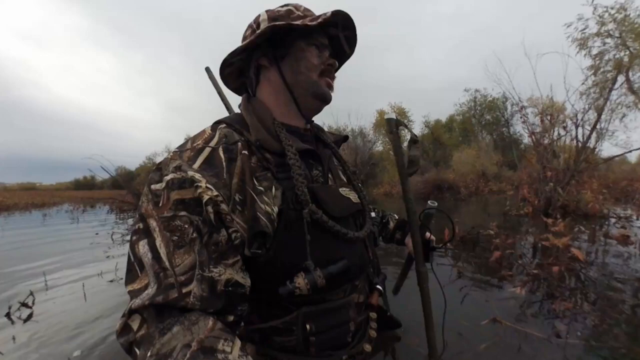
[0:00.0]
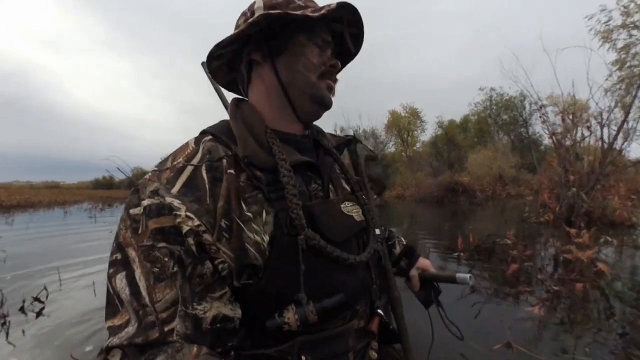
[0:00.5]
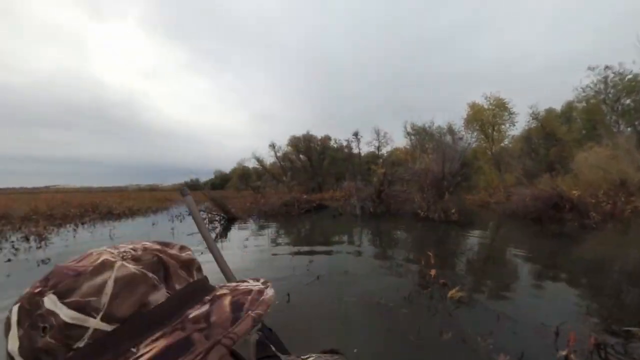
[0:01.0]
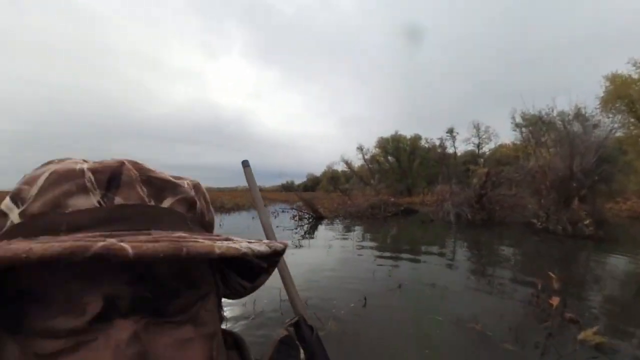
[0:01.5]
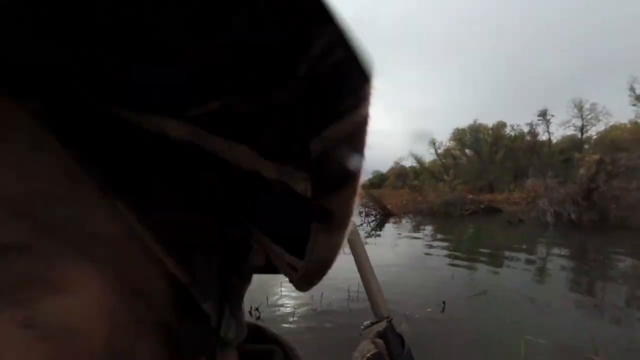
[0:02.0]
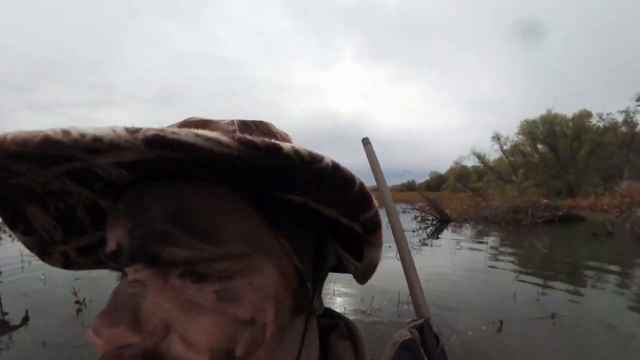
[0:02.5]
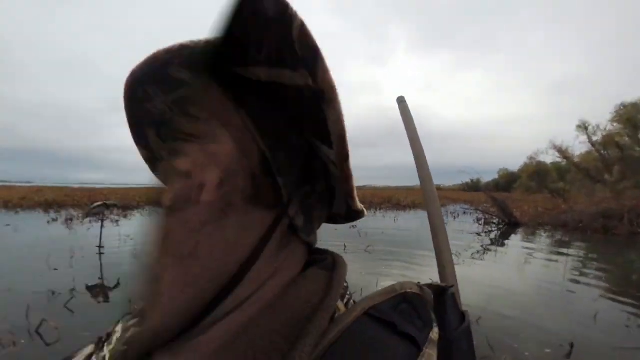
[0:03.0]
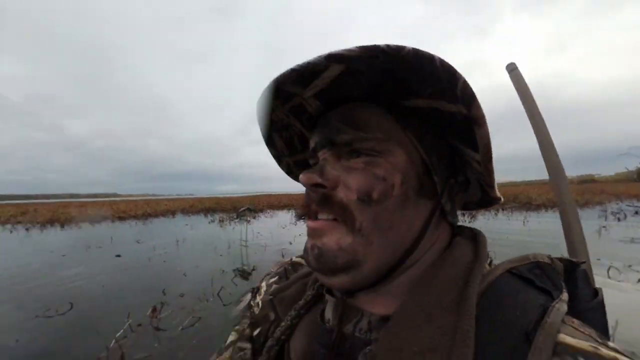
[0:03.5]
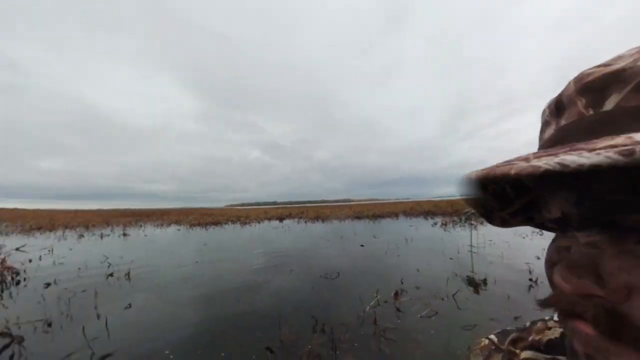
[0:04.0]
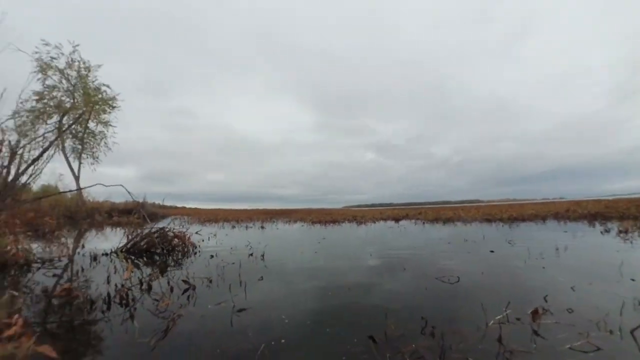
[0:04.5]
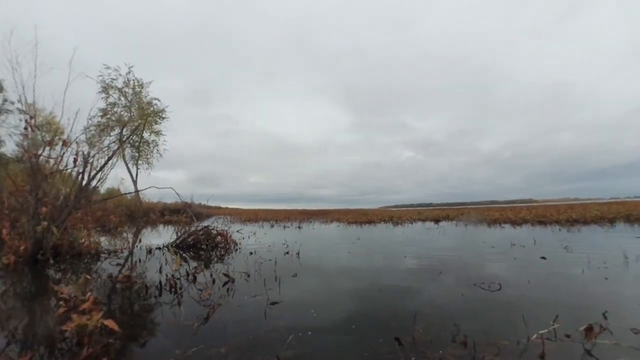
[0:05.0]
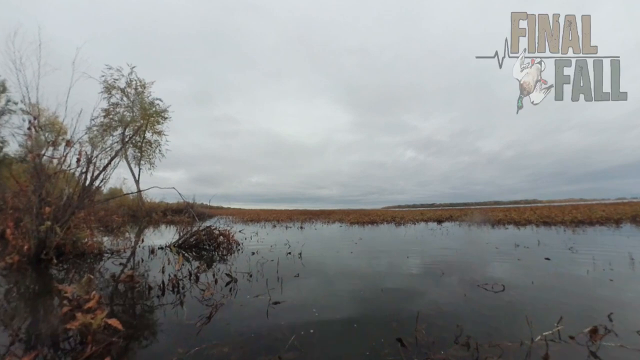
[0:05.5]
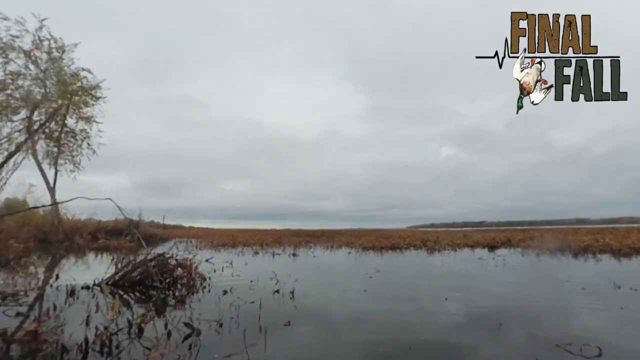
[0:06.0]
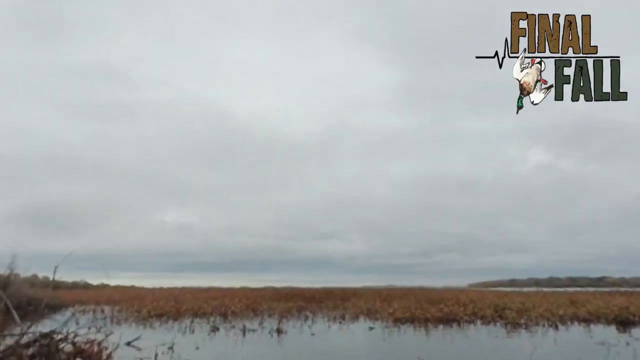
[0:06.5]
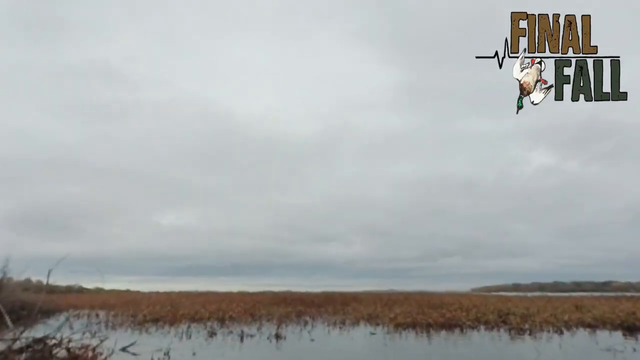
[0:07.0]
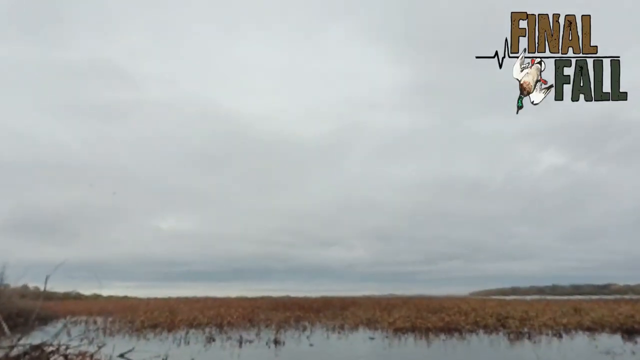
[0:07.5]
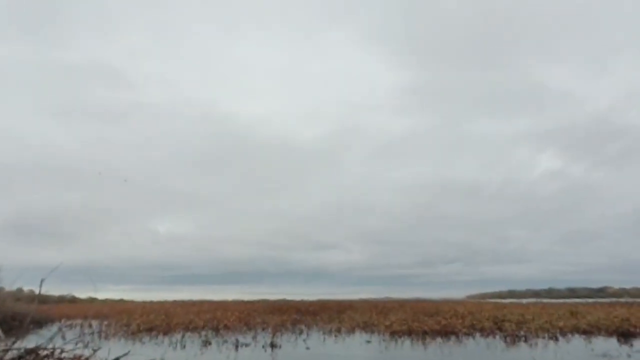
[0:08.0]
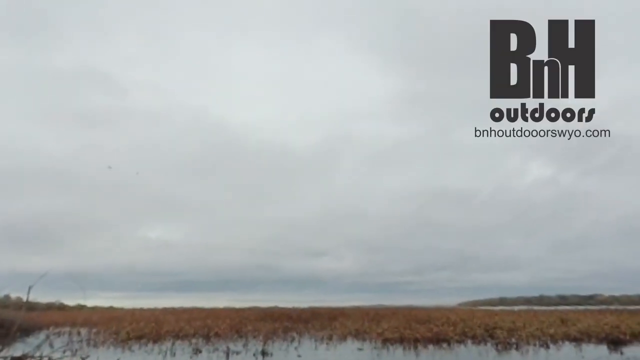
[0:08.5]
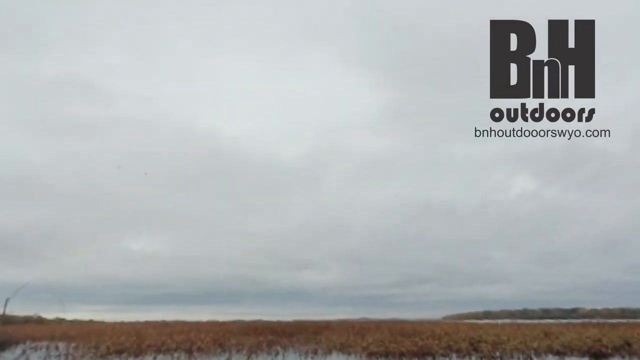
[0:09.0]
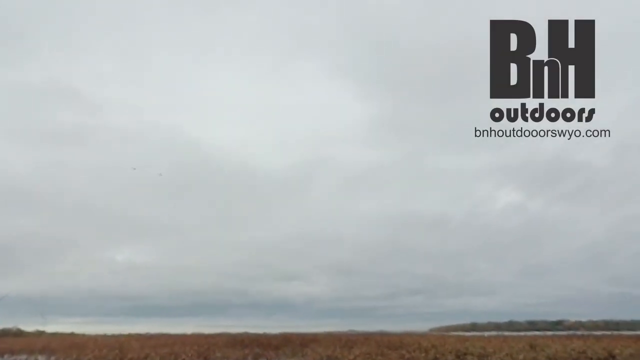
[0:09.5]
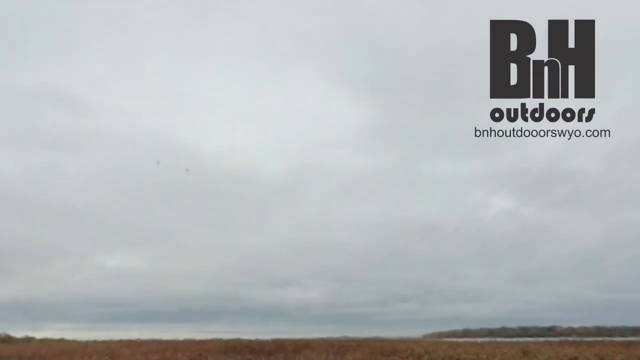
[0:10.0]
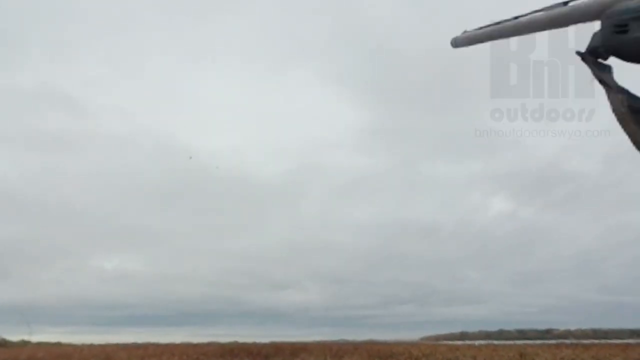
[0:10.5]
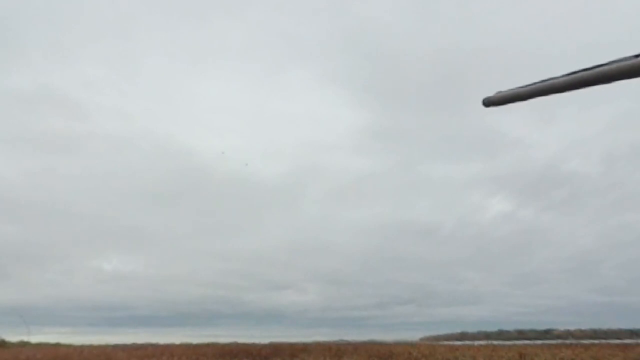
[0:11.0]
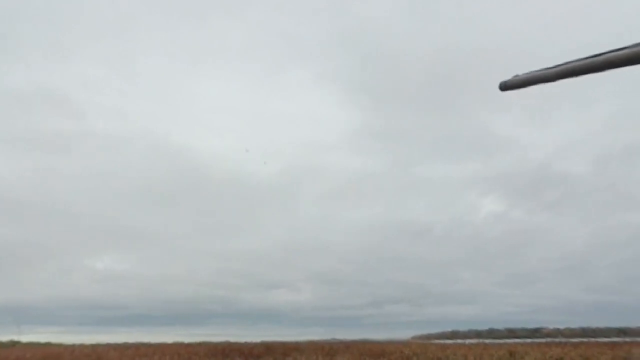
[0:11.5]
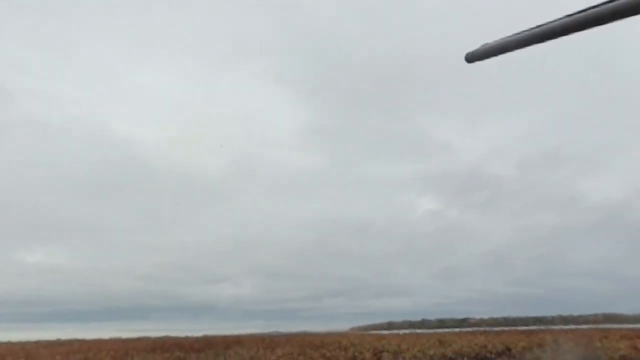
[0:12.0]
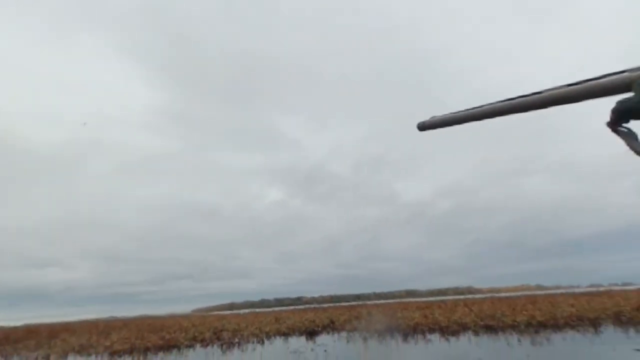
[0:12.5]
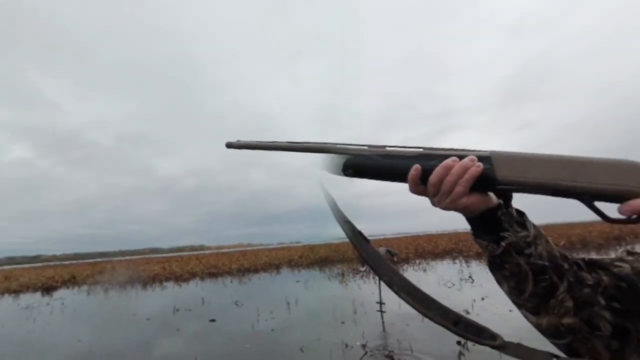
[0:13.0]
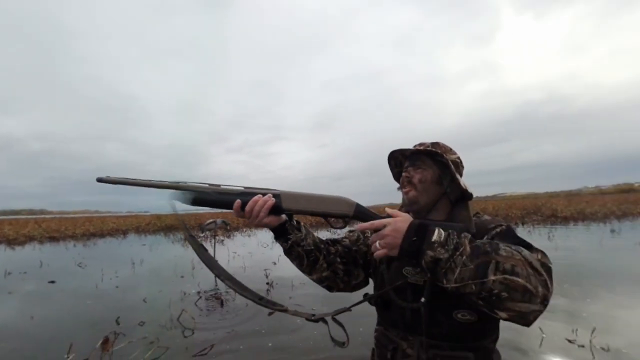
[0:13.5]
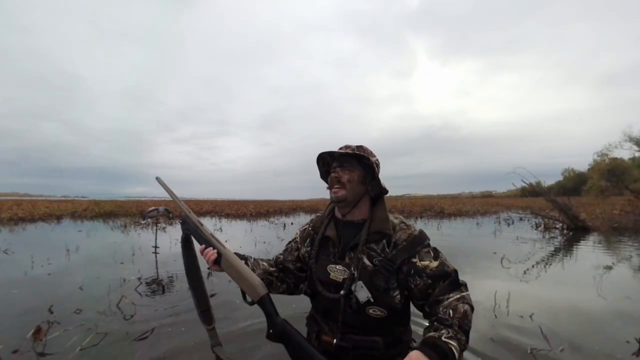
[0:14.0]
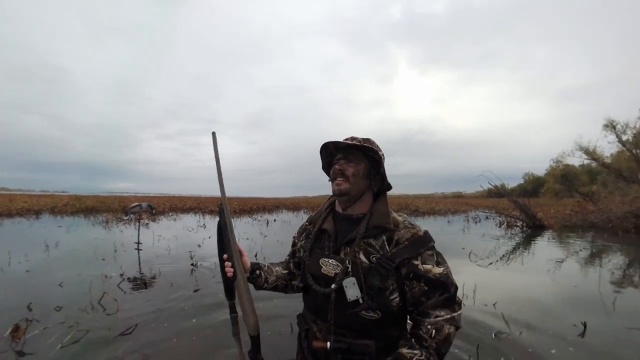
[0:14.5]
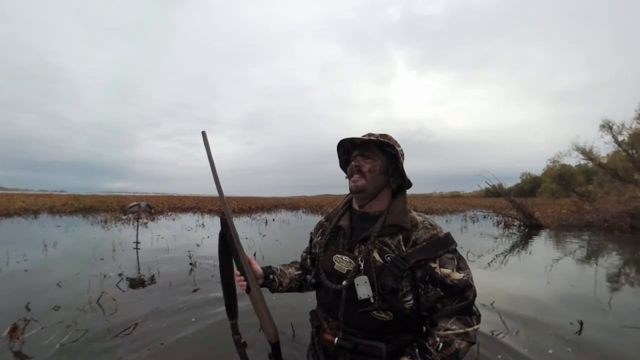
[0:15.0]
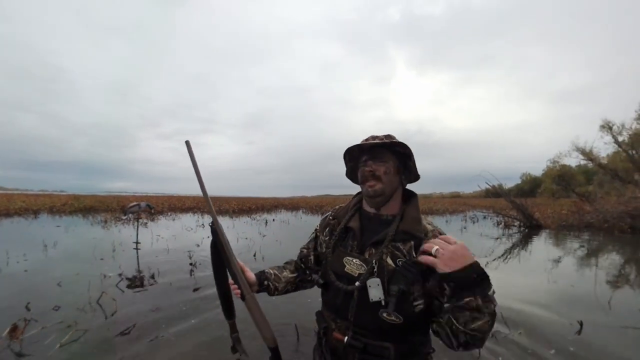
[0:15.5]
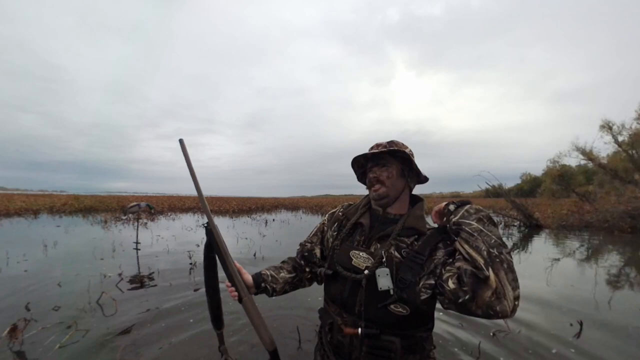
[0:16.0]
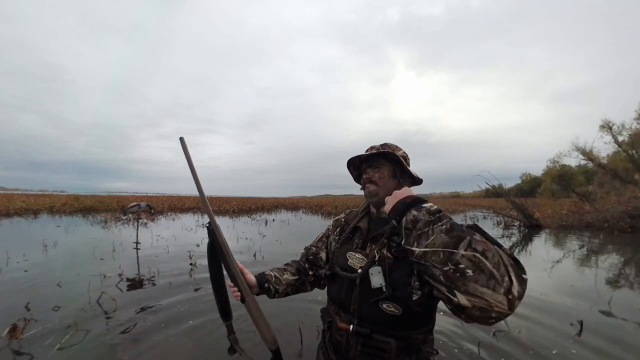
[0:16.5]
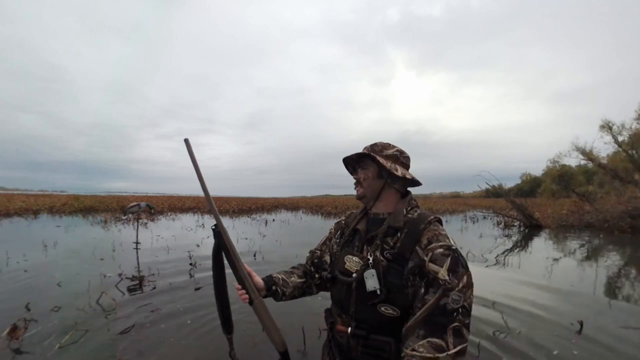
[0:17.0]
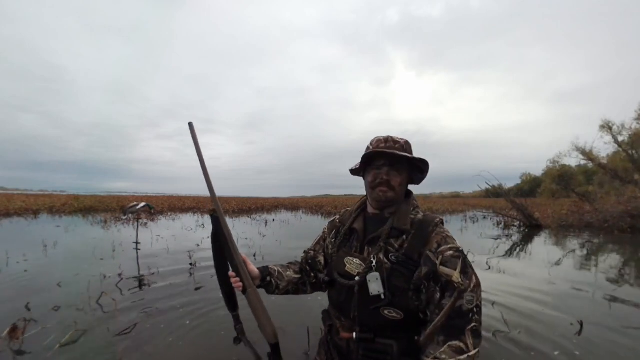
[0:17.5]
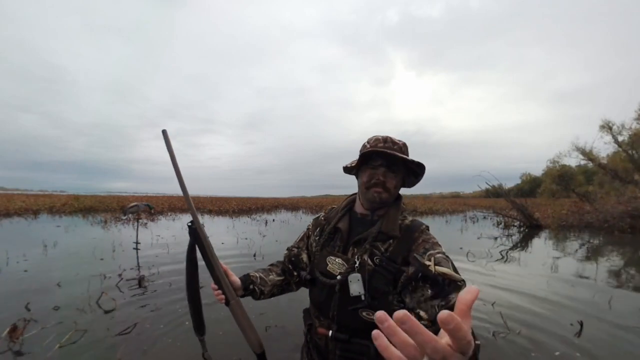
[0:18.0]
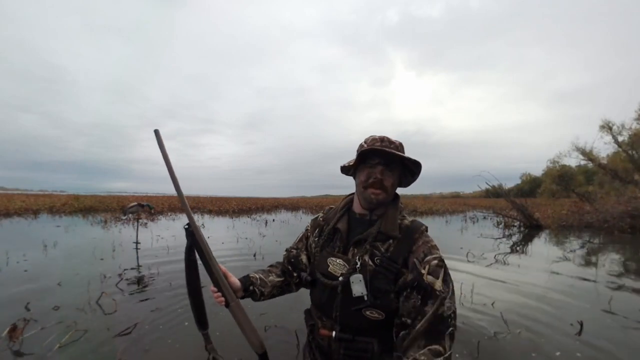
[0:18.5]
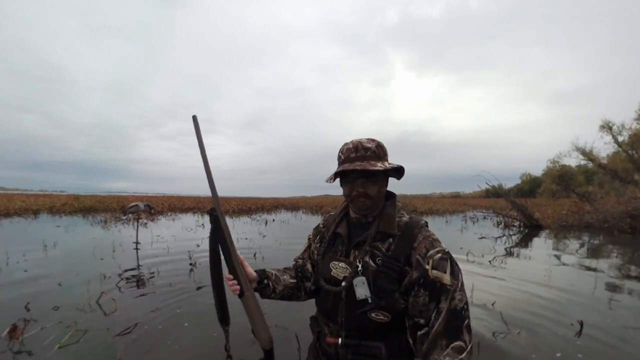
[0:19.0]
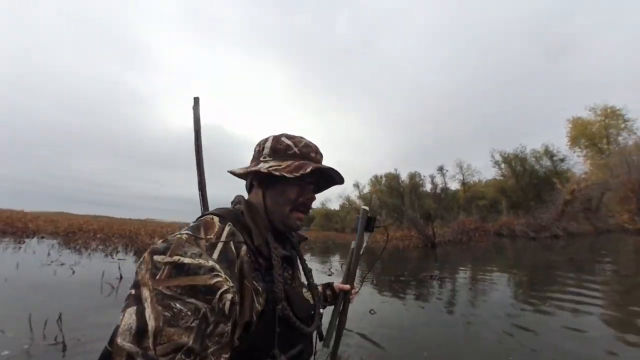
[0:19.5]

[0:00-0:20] A man in military-colored clothes is outside in a swamp. His face is painted with some colors, maybe to hide himself when approaching something. He holds things in both his left and right hands, wears a hat and pretty heavy equipment, and has a logo on the front of his chest, some ropes, and some kind of tool on his back. He moves the camera around to show what he is looking at. Text at the top right of the screen reads "Final Fall," with some kind of heart graph ending, indicating death, and a duck falling to the ground; this is possibly a duck hunting video. Then more text appears reading "B&H Outdoors." Birds fly in the sky, and at the top right of the screen the barrel of a gun aims toward them and fires. The person holds a shotgun, a rifle of some sort, and shoots toward the birds. He is not on a boat but is almost half his body deep in the swamp. They walk through the water, probably to find what they hit.